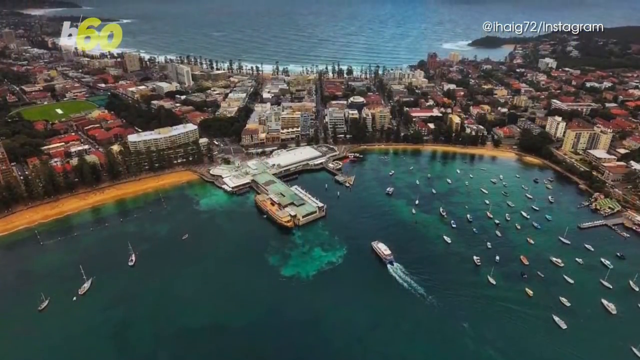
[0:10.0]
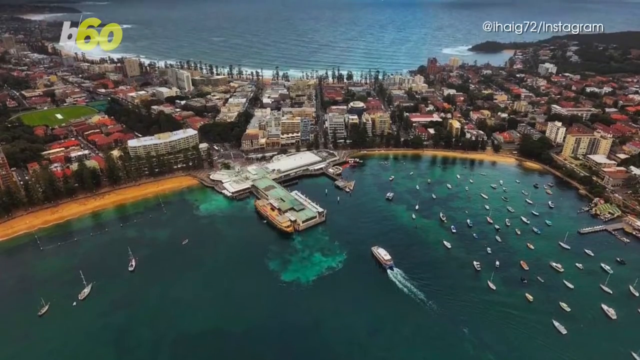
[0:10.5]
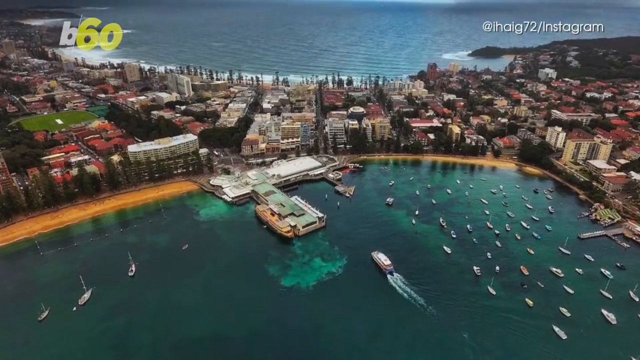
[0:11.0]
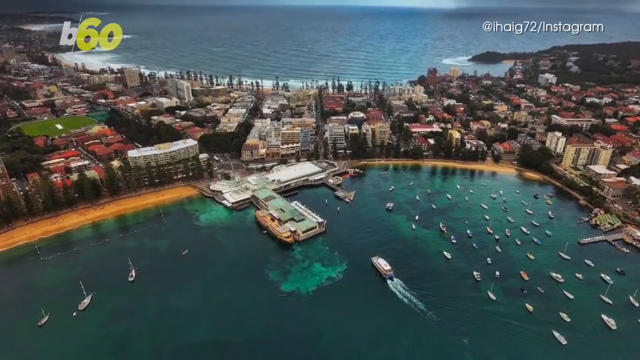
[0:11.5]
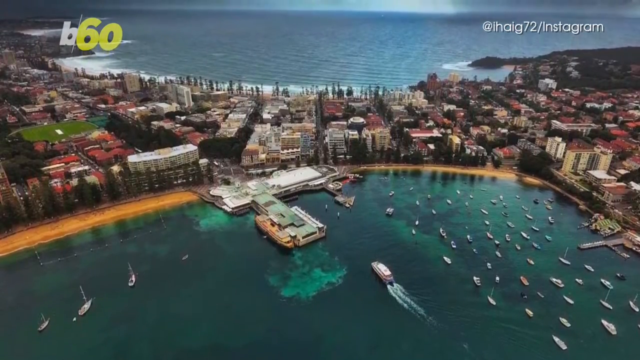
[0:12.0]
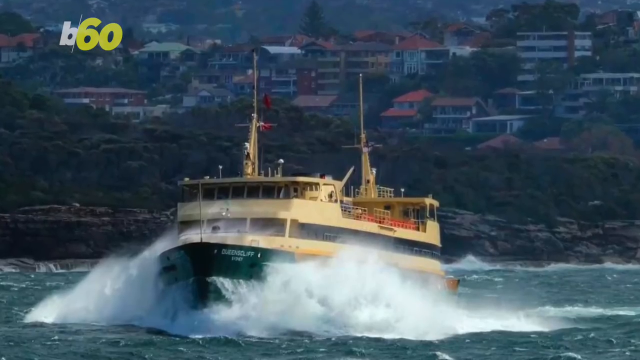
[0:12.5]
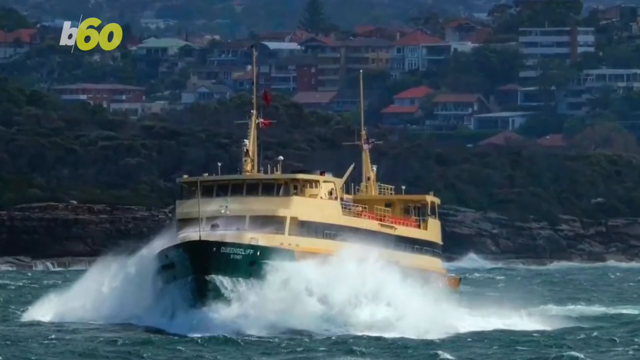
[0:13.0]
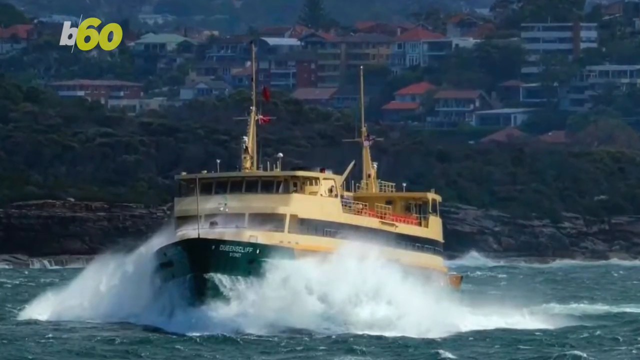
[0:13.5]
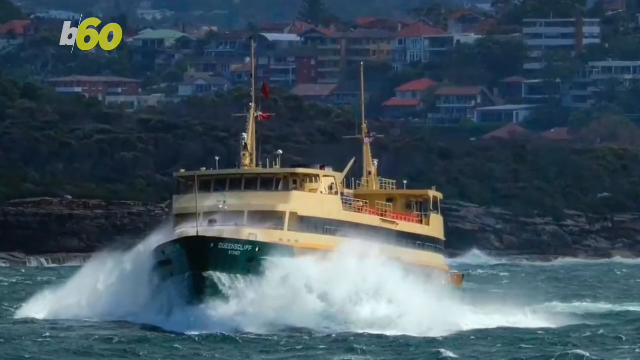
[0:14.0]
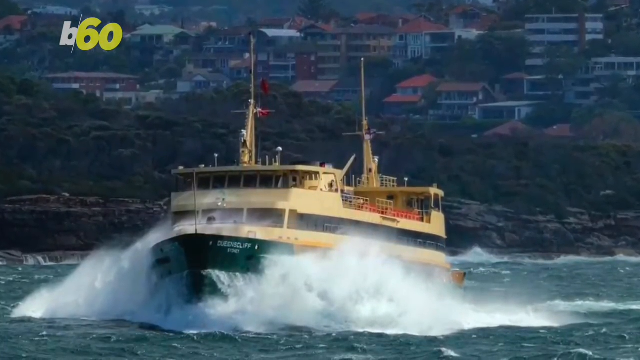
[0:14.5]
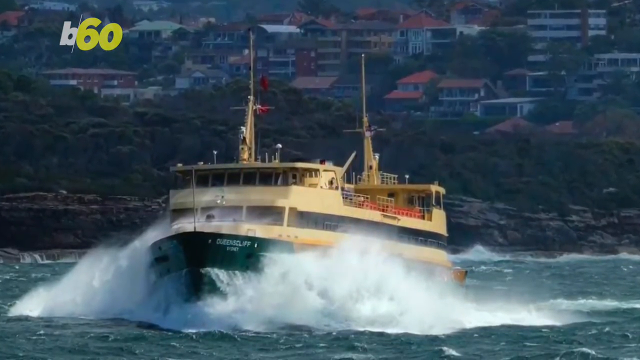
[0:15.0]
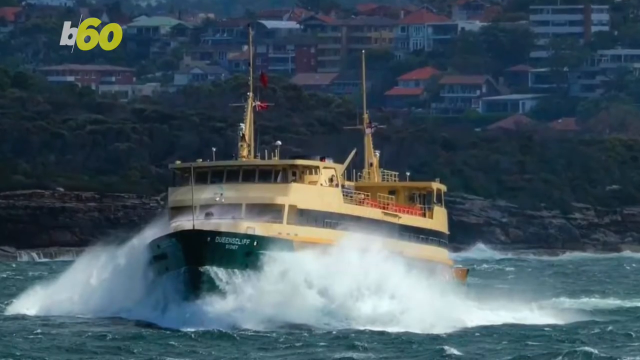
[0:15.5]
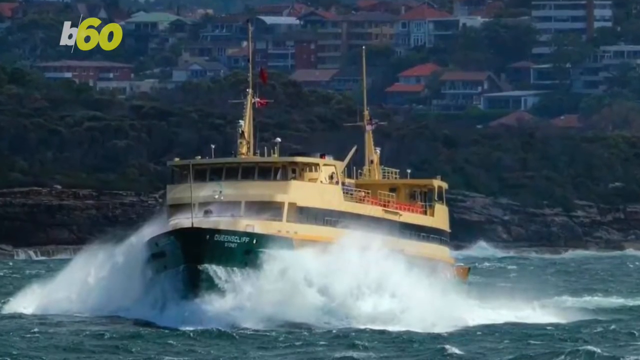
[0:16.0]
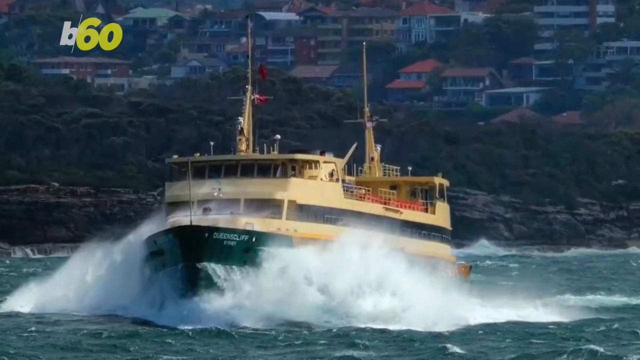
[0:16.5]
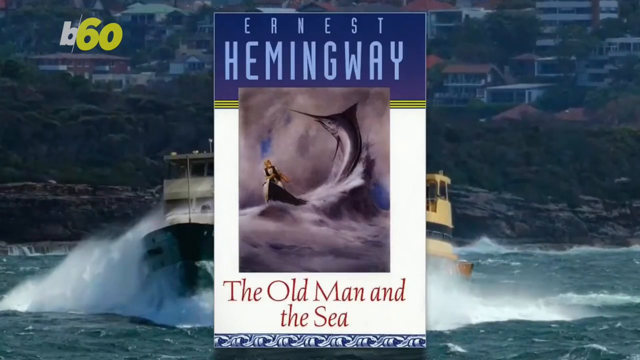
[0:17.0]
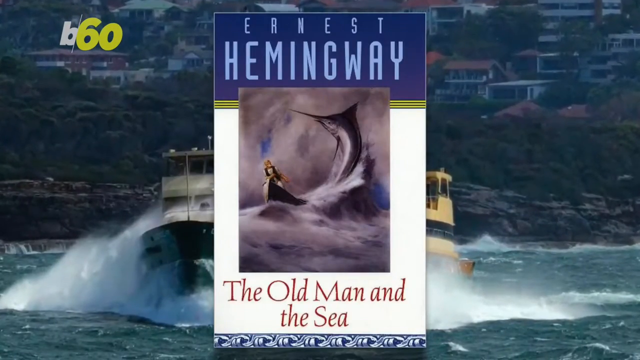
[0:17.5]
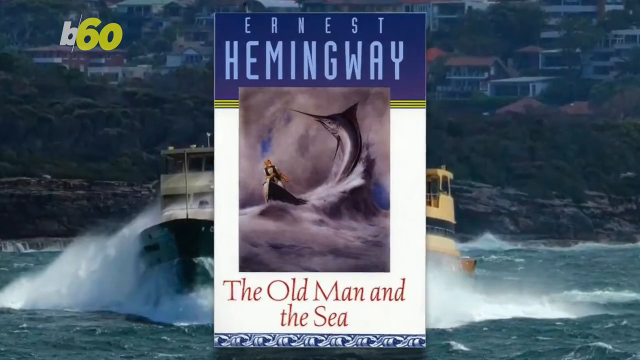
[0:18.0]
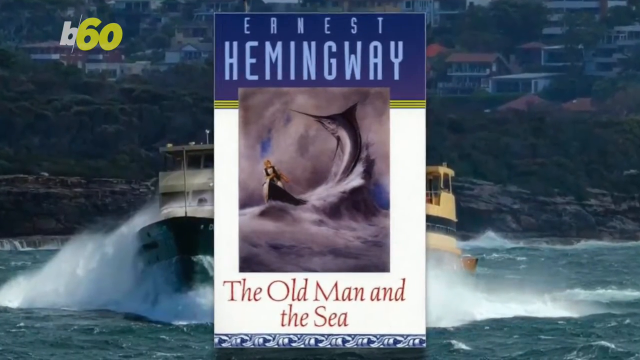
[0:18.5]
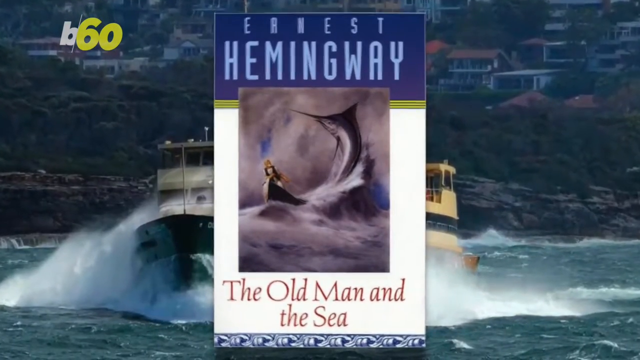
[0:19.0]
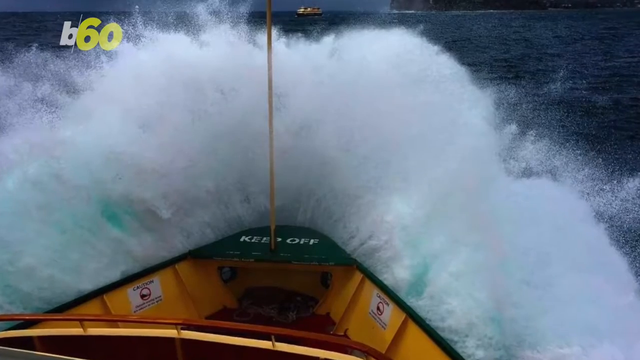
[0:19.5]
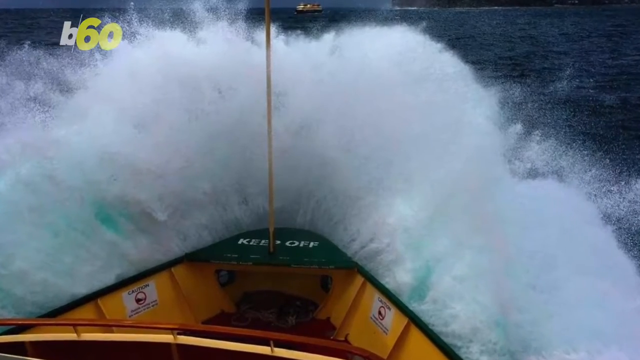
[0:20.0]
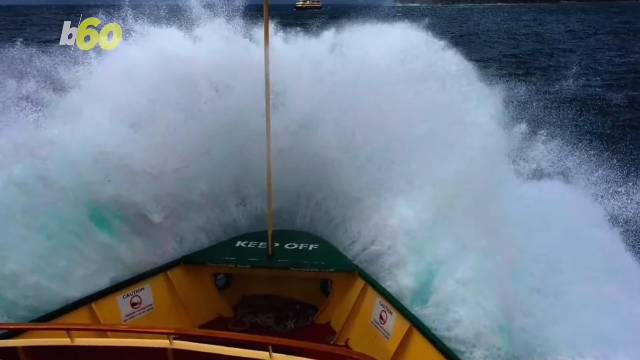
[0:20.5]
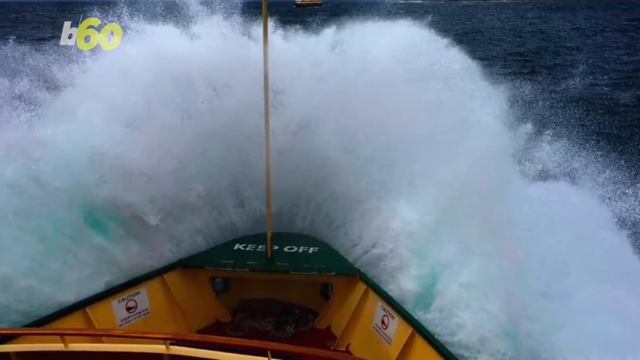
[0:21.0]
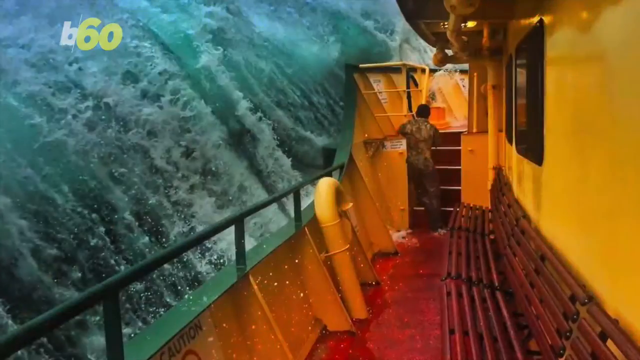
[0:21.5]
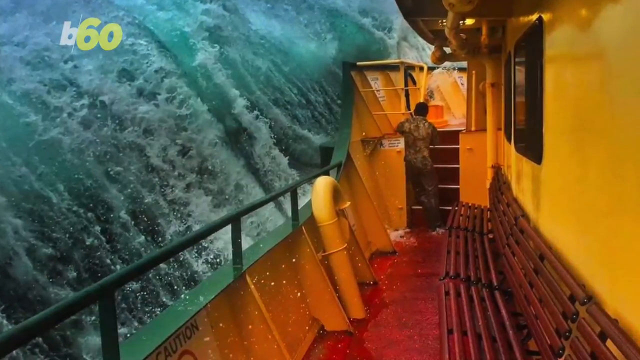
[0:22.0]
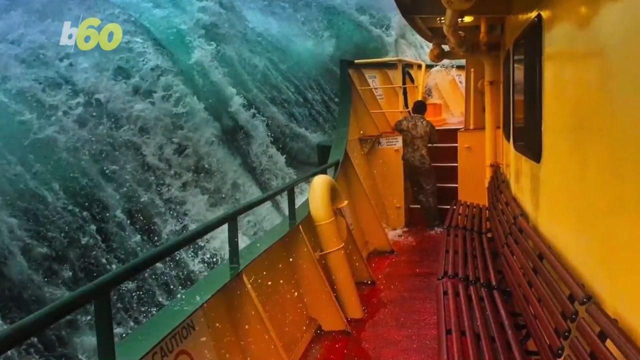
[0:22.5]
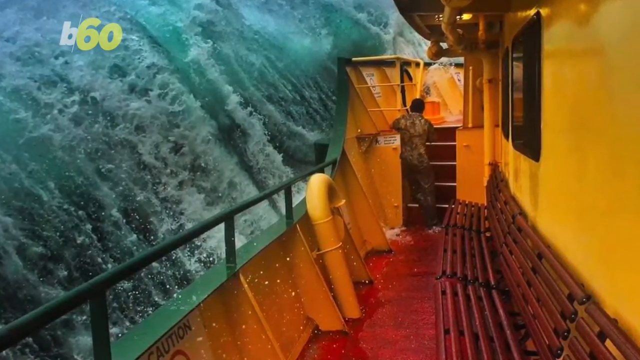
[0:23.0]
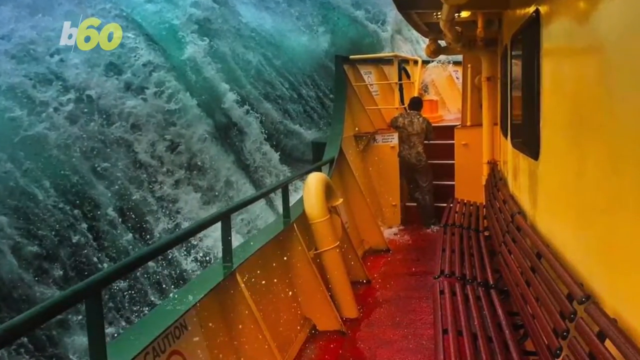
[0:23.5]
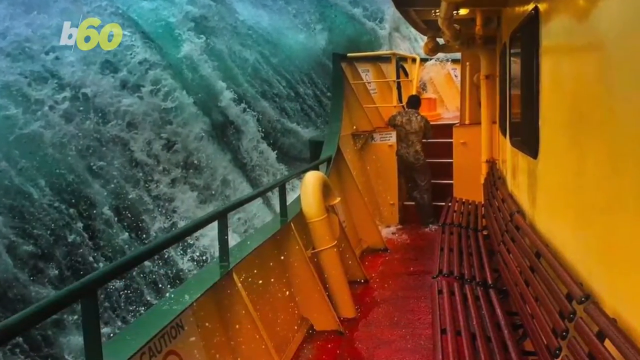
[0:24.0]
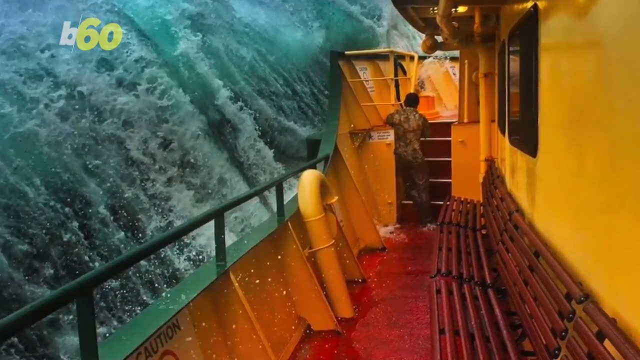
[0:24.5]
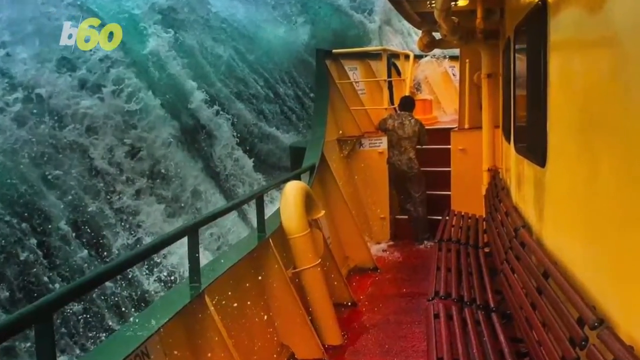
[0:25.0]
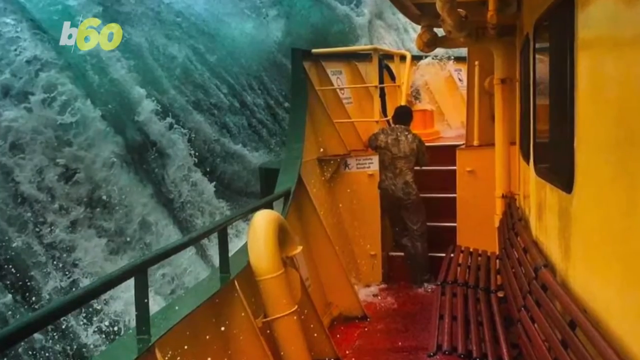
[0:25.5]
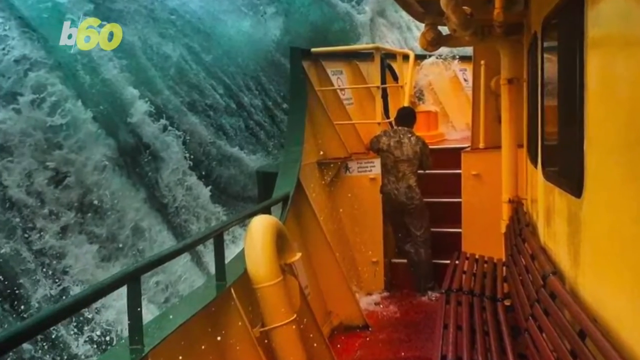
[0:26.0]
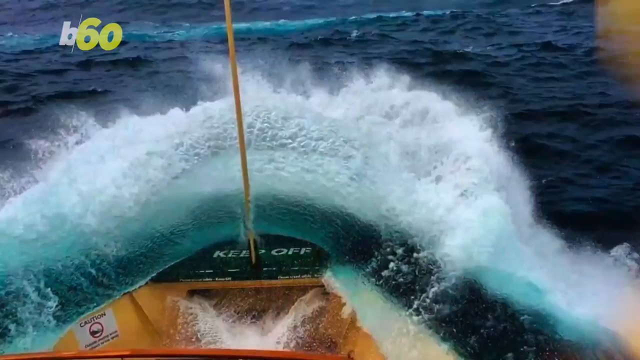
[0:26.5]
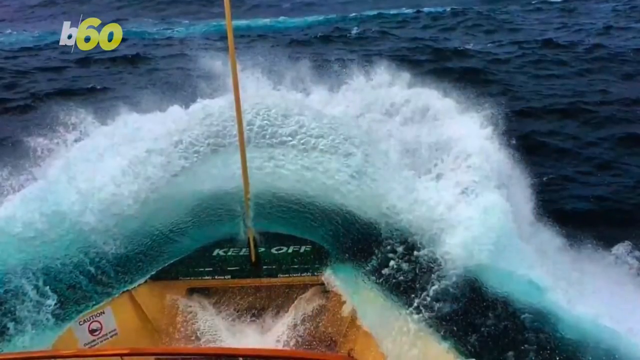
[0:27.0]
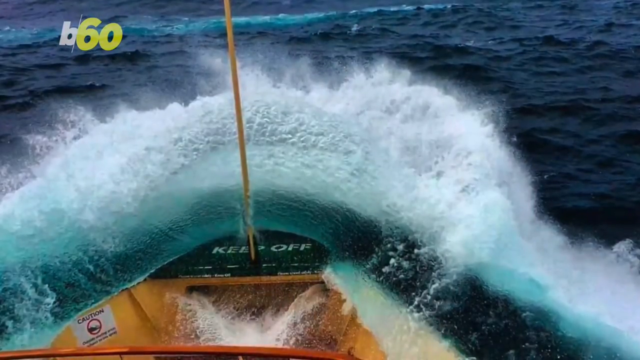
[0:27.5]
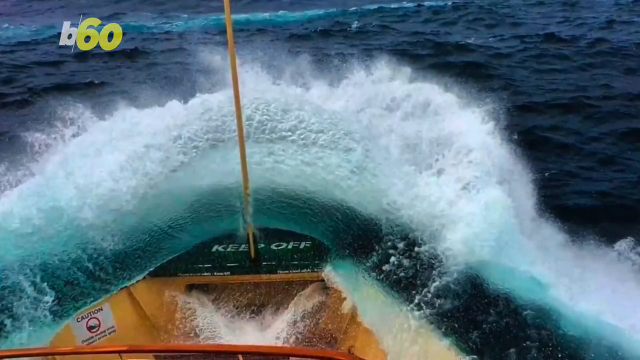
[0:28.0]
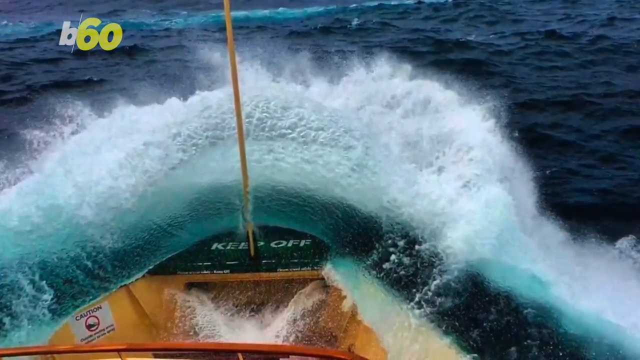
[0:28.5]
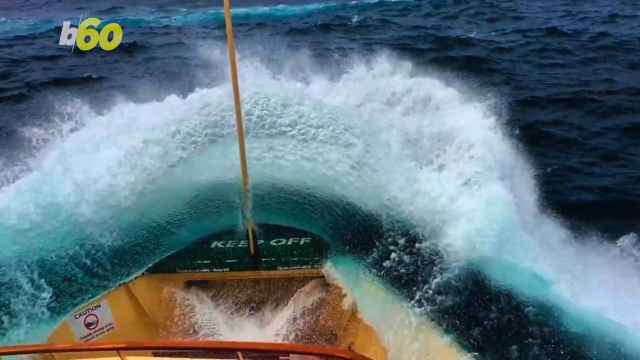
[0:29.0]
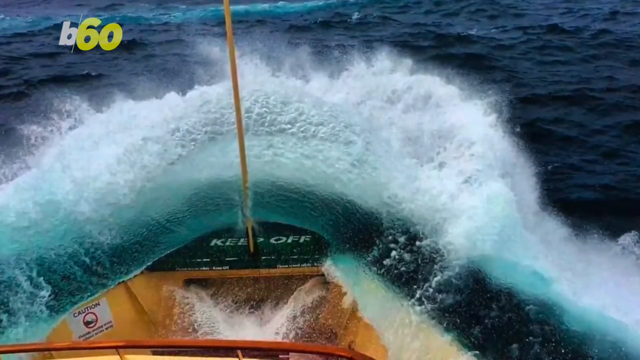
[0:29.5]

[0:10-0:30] An aerial view of Sydney Harbour shows what looks like an inlet of calm water protected by a crescent of land; on the opposite side of the crescent is open sea as far as the eye can see. There is a beach on this shoreline but no boats anchored here, and the calm harbour has no waves. Next is a close-up of a ferry, apparently heading out to sea, in what seems to be rather rough water, with a lot of spray and foamy waves crashing along the front bow. In the background, houses and residential buildings are up on a rocky hill. The camera zooms in, and a close-up image of Ernest Hemingway's book The Old Man and the Sea appears, showing fishermen in a small fishing boat amid big waves and rough sea, with a swordfish jumping out of the water. The view then looks over the bow of one of the ferries, as if from the bridge over the deck, as waves crash up in white water; the water looks quite rough. Next, very rough seas surge along the port or starboard side of the ferry, where a man can just be made out standing there, maybe trying to go up the steps. The wave on the left-hand side of the image is very high, and the water is greenish with white waves and spray.